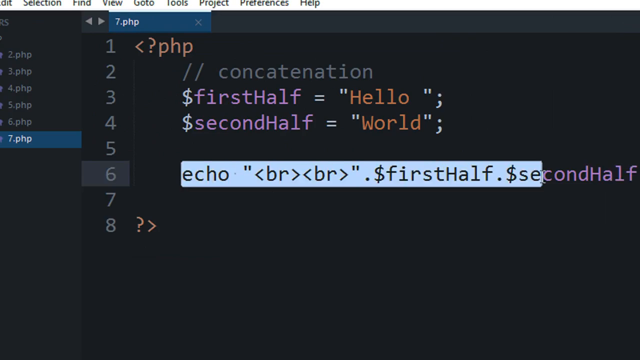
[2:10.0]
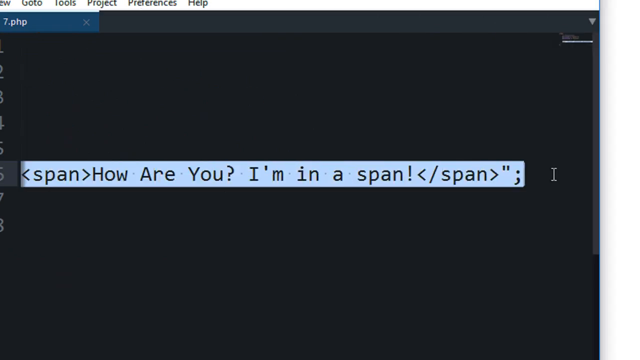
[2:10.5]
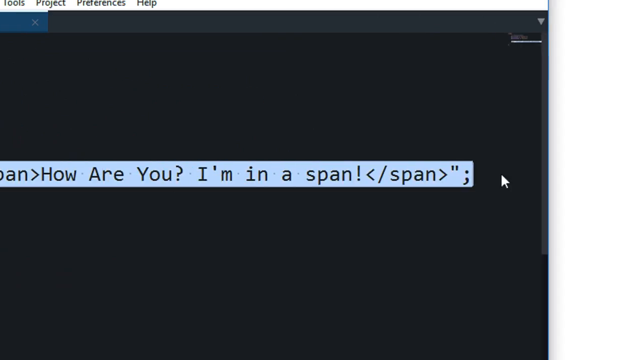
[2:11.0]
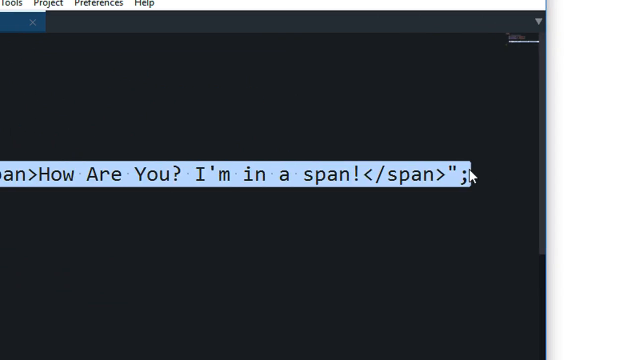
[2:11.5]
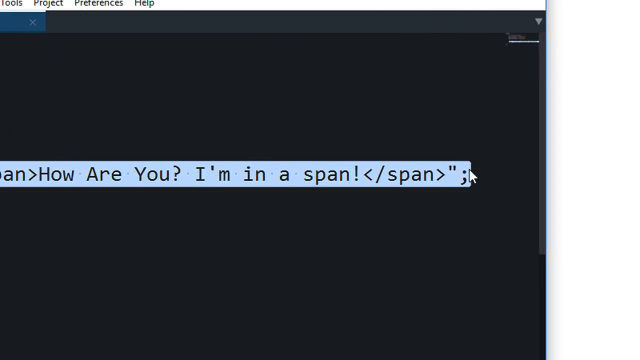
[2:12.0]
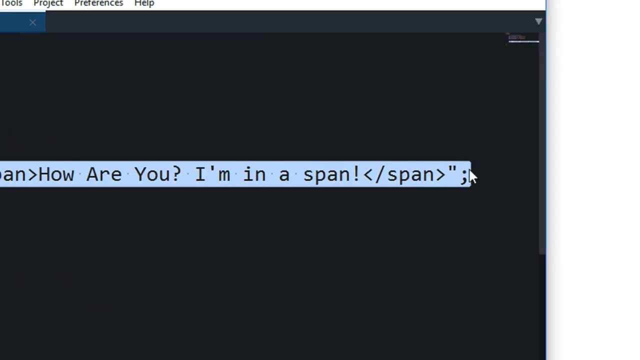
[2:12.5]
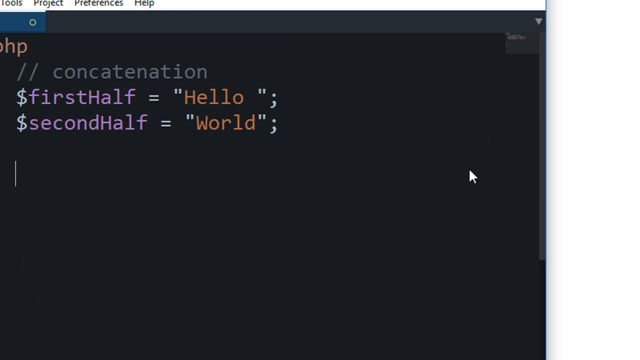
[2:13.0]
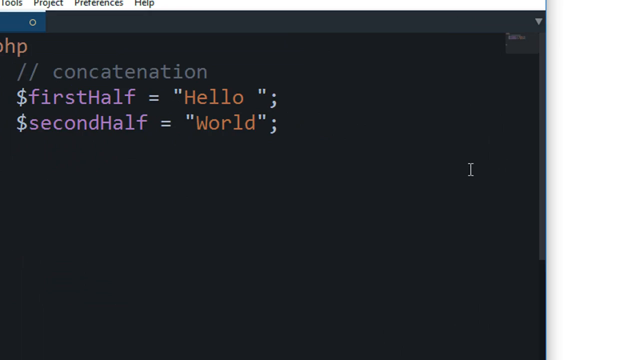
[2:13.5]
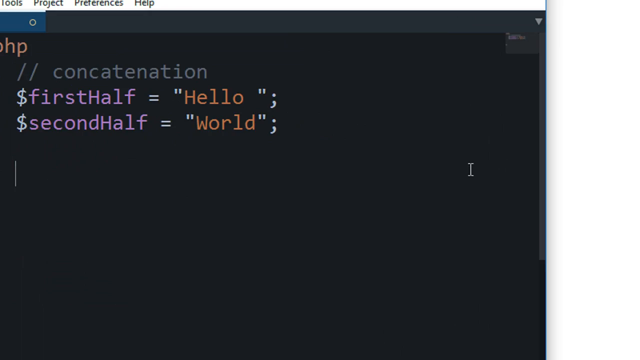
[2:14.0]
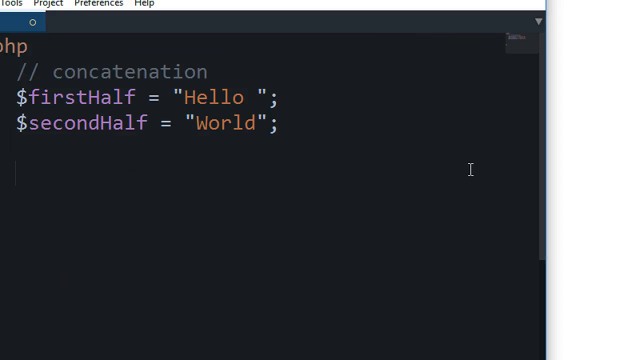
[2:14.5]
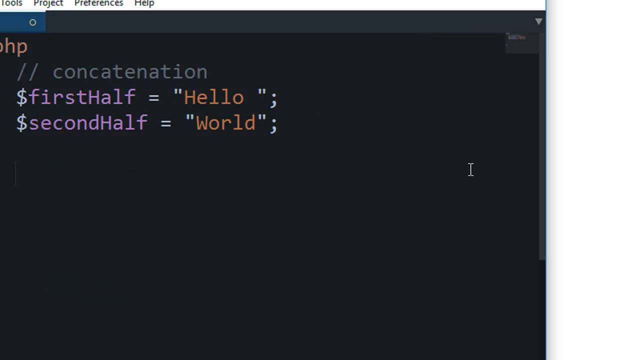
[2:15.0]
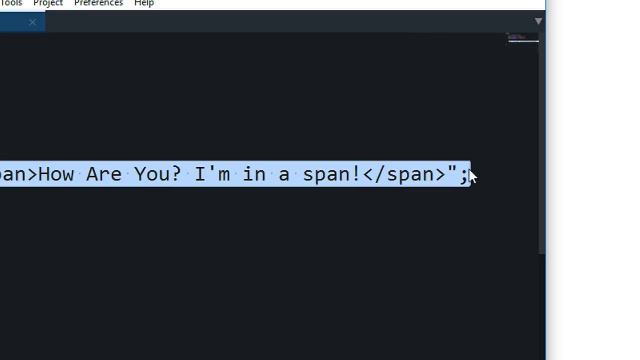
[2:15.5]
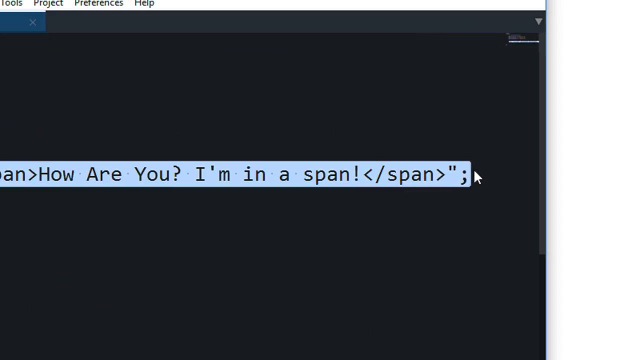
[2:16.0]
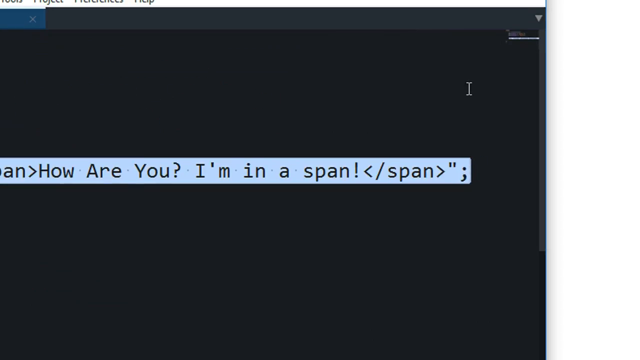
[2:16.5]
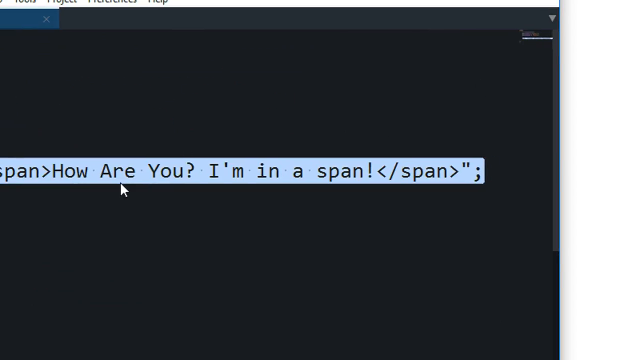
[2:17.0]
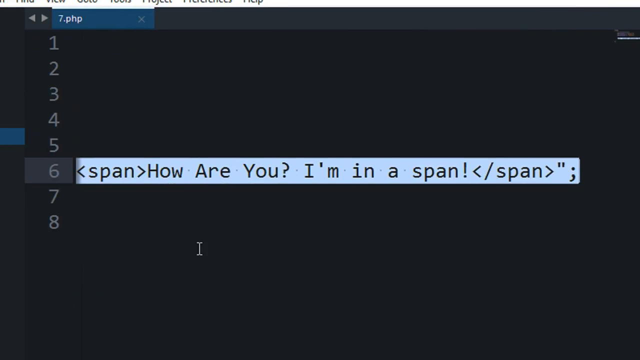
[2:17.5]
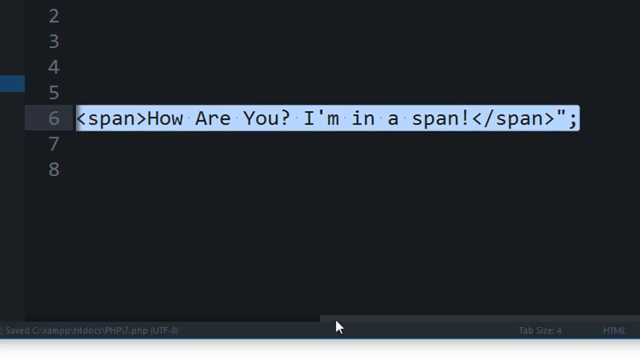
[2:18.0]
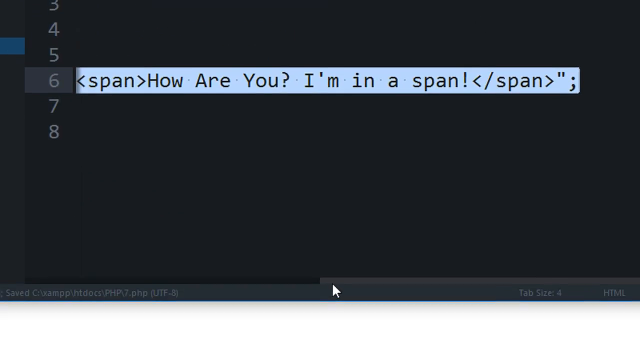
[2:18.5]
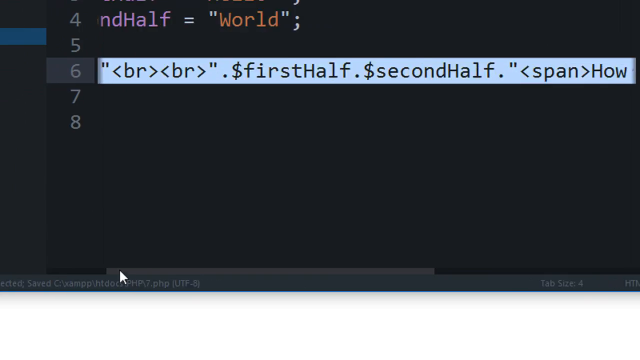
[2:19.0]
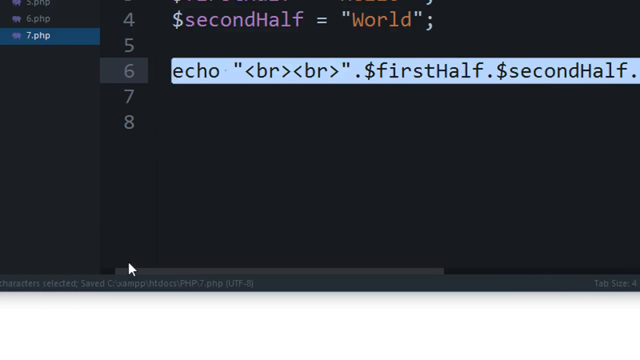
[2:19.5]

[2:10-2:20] The view returns to the code and the echo statement. The individual highlights the entire echo statement, deletes it, and then repastes it in the file 7.php. The code is on line 6 of the PHP file and is long enough that scrolling to the right is needed to see all of it: the first half appended, the second half appended, and a span saying "how are you, I am a span", with the output being "hello world, how are you, I am a span".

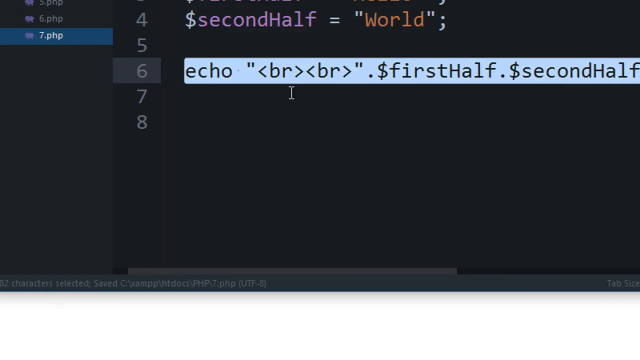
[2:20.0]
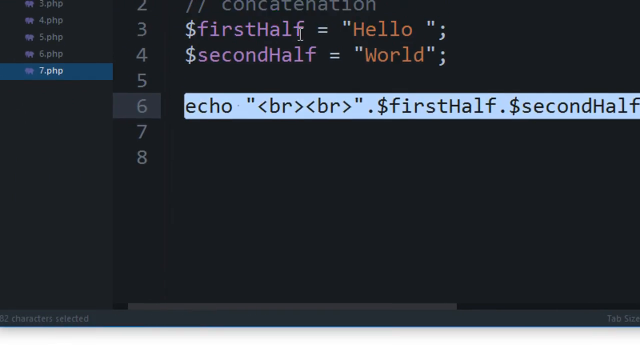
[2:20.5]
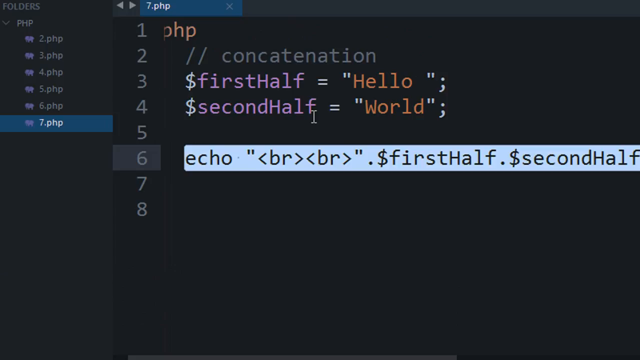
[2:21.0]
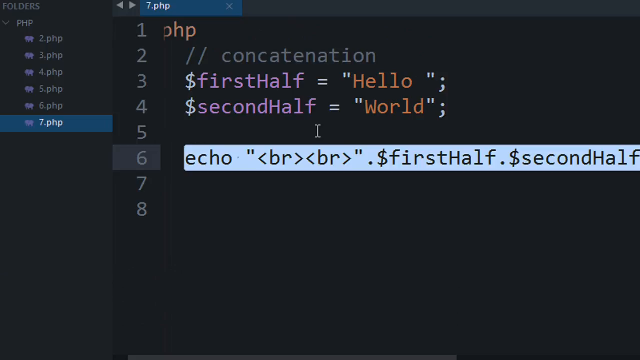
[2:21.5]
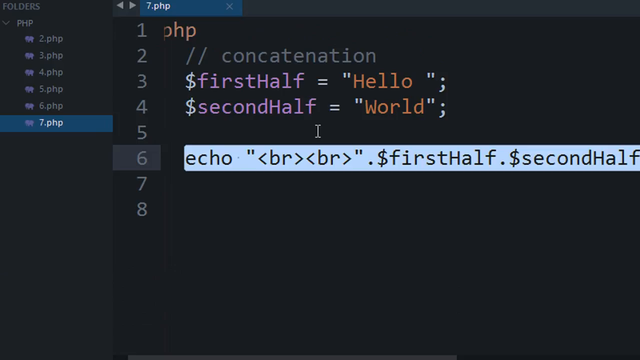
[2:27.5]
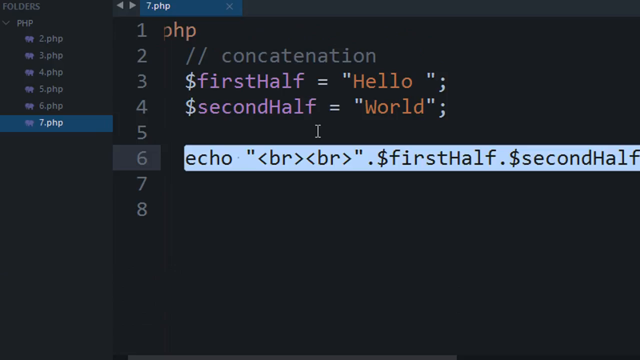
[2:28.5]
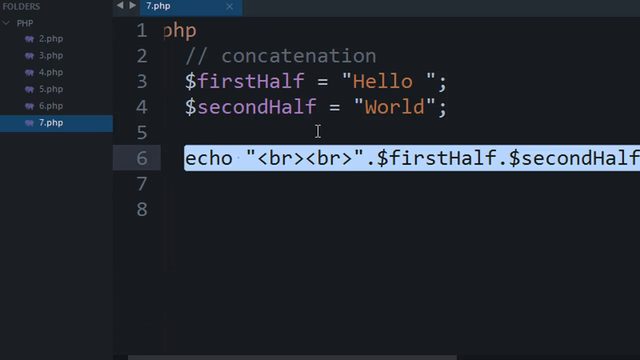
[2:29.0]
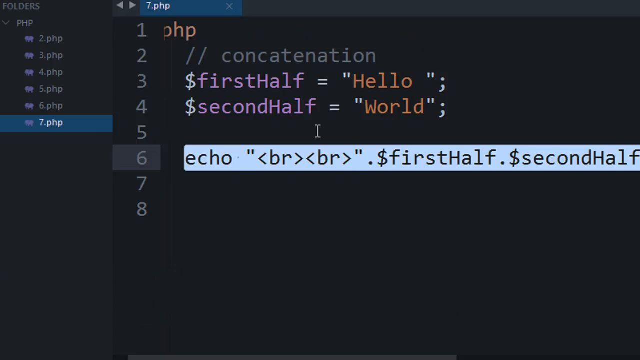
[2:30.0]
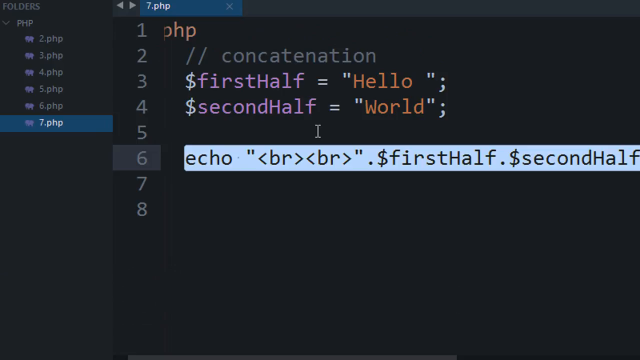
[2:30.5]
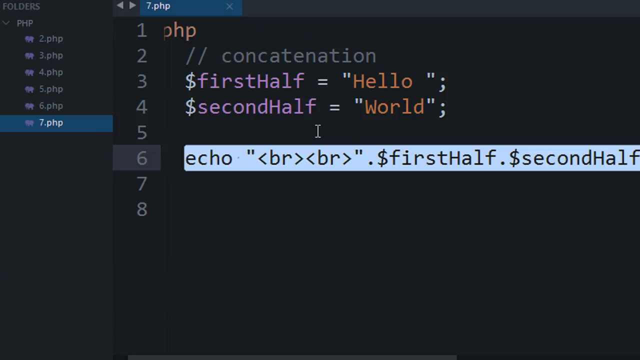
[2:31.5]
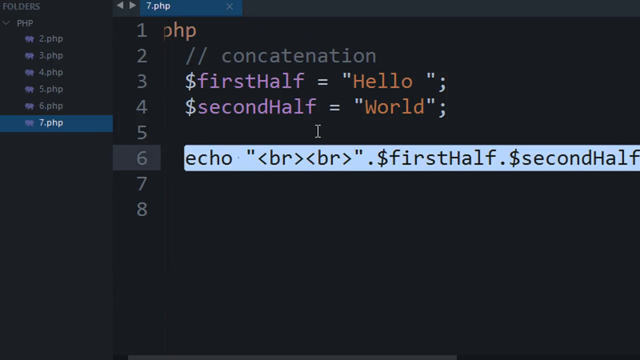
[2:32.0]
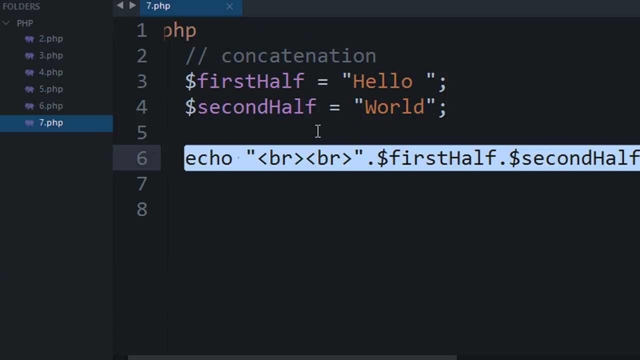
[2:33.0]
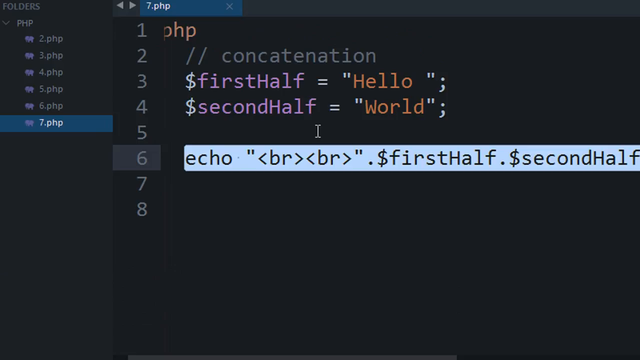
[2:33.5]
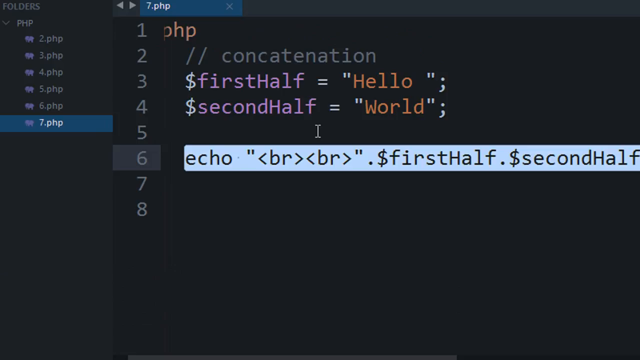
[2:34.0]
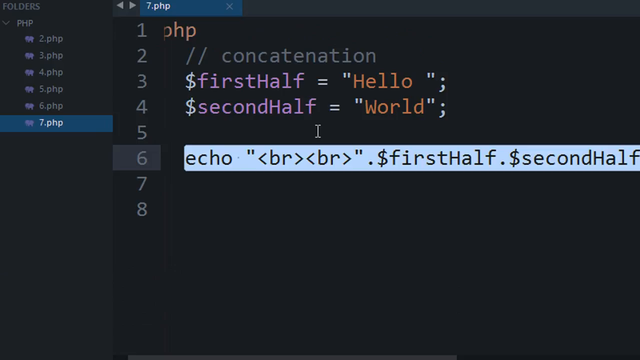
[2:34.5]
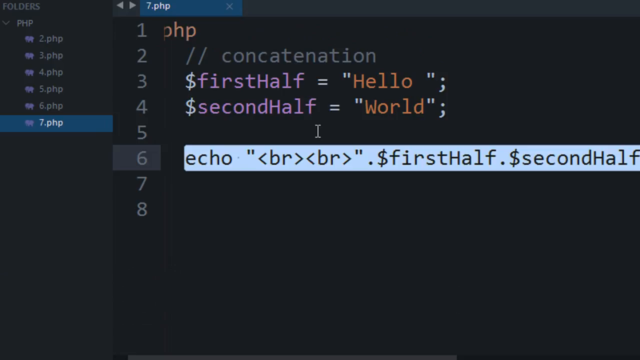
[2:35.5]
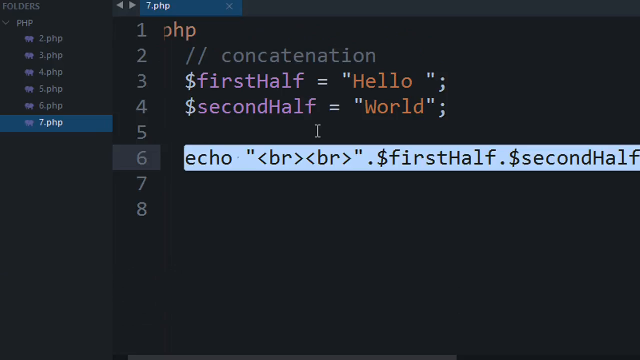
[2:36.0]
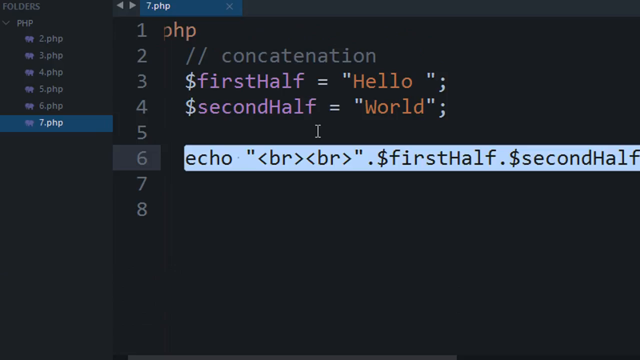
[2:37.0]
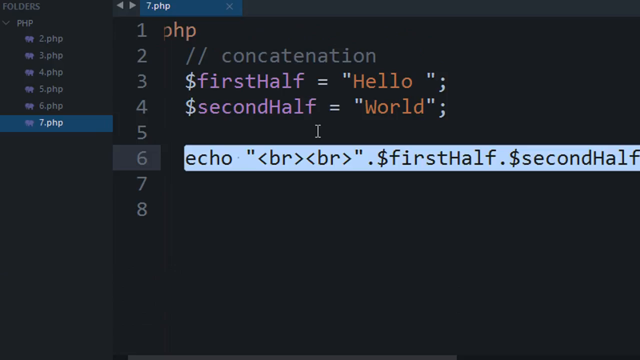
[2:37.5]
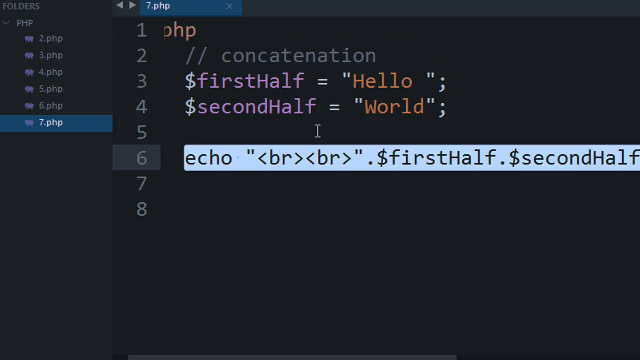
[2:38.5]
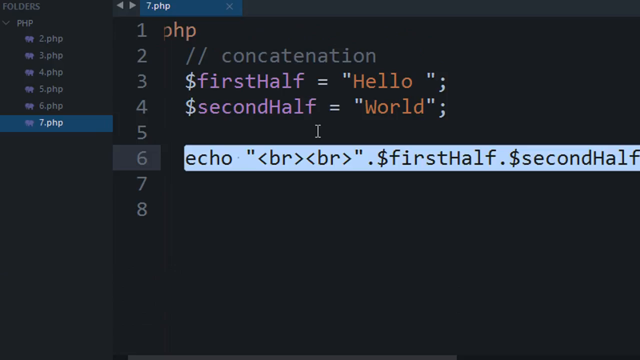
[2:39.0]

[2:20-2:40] The individual re-edits the code, and the code remains highlighted in Sublime, the editor being used for the PHP code. The section is about concatenation of strings.